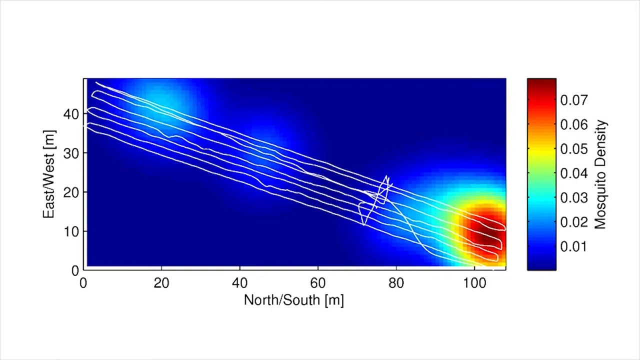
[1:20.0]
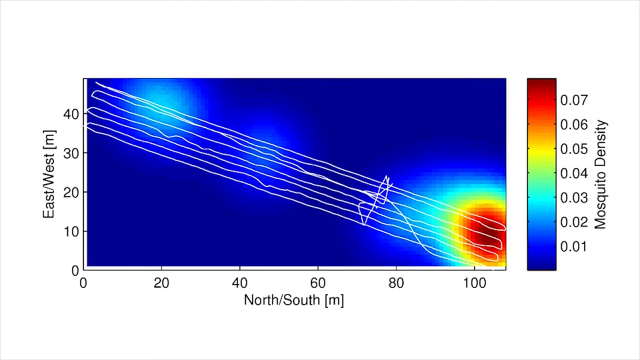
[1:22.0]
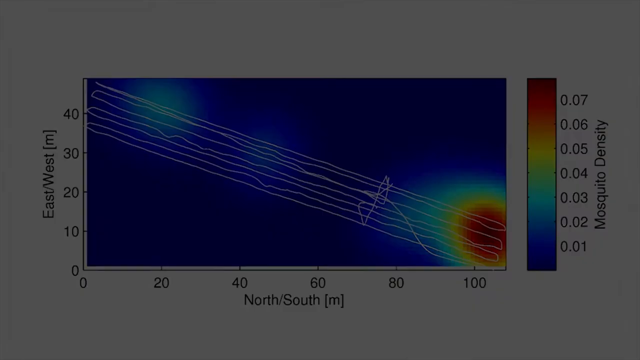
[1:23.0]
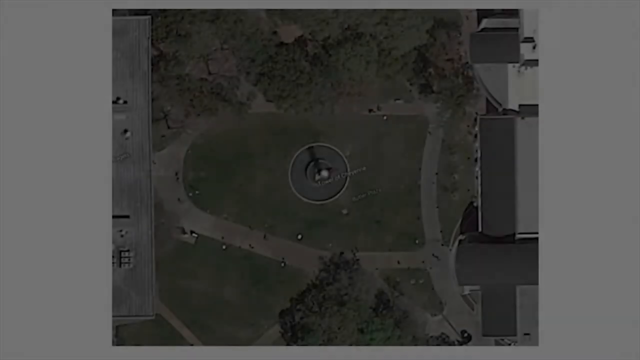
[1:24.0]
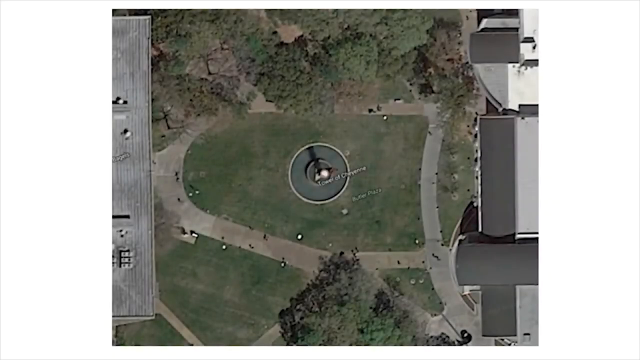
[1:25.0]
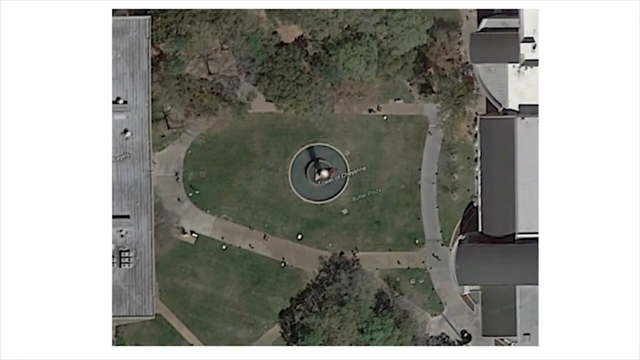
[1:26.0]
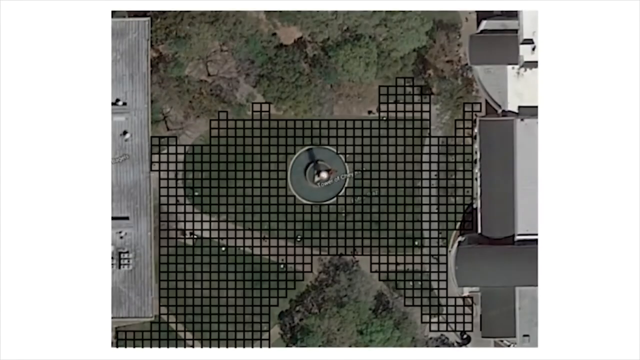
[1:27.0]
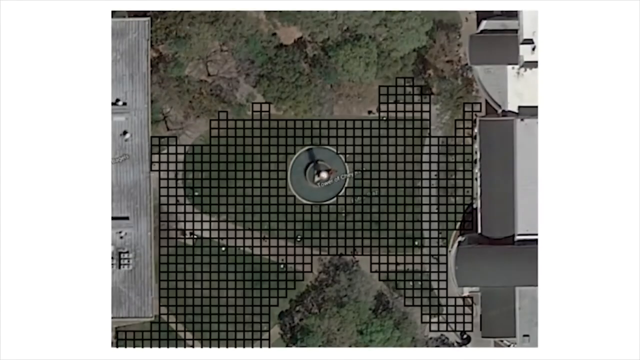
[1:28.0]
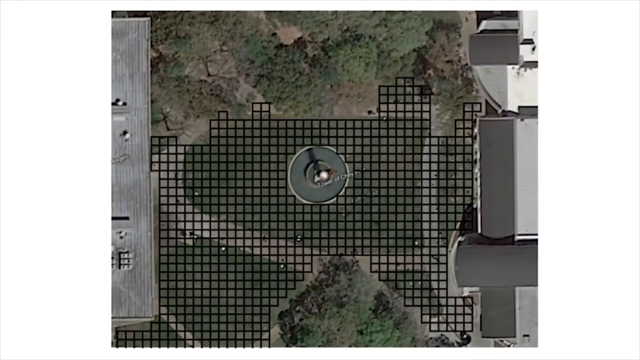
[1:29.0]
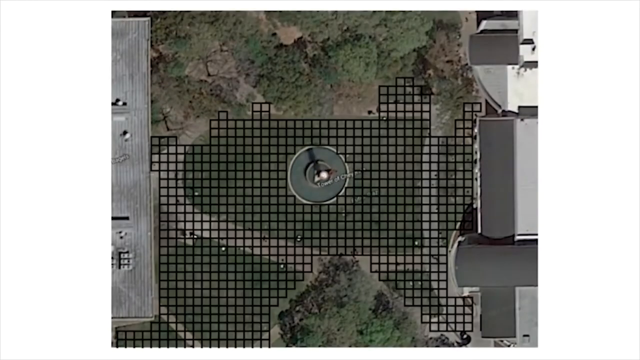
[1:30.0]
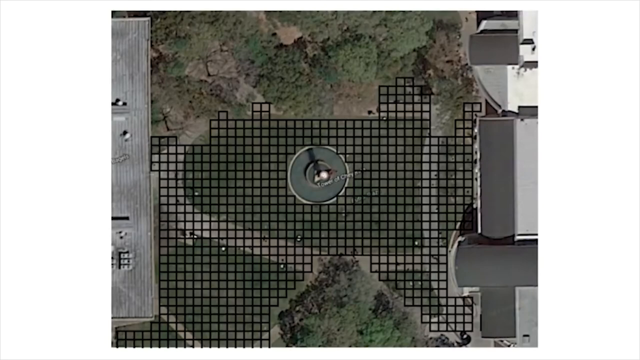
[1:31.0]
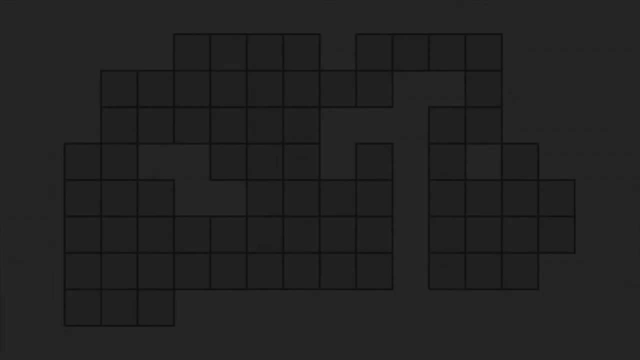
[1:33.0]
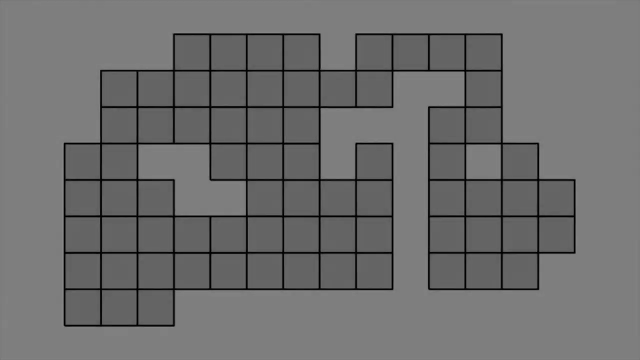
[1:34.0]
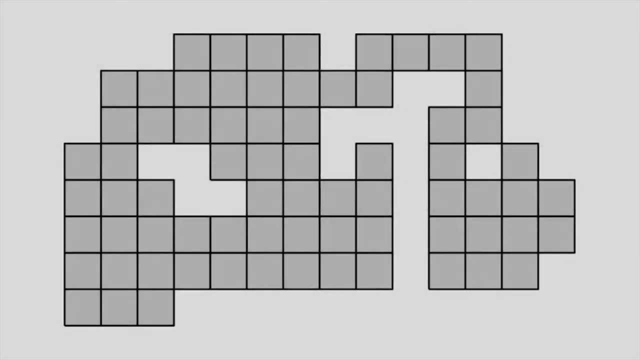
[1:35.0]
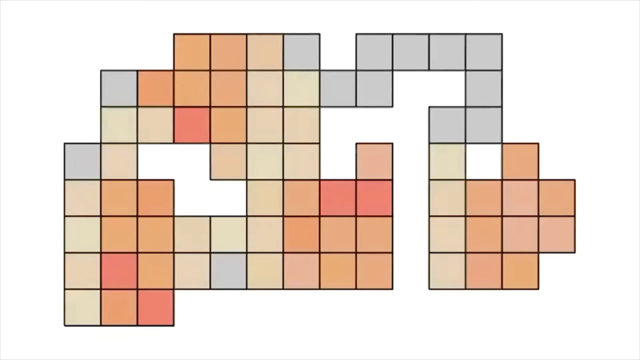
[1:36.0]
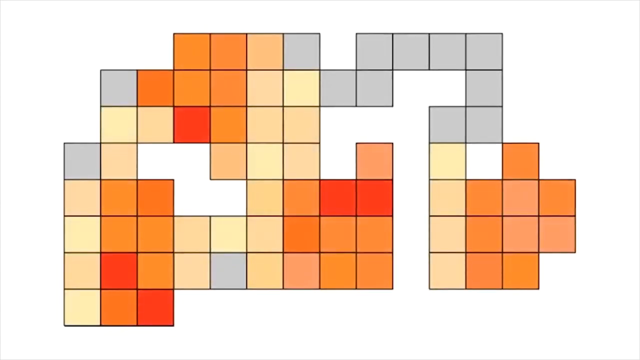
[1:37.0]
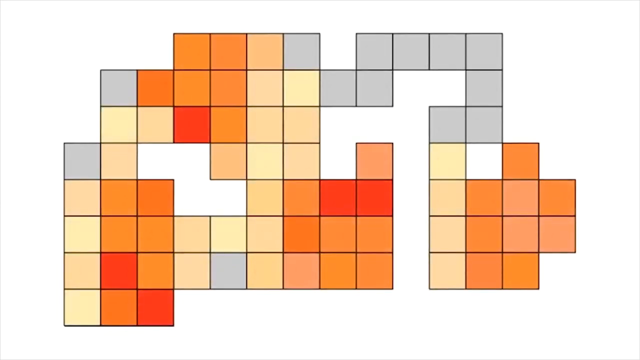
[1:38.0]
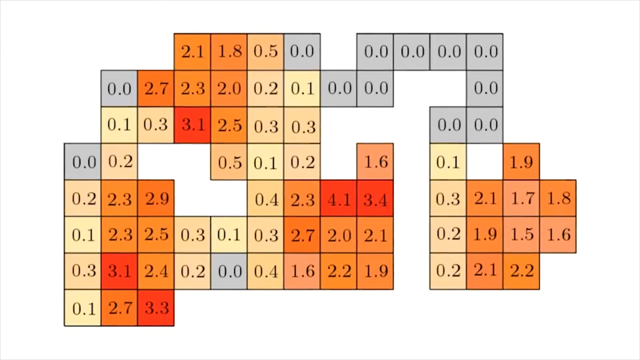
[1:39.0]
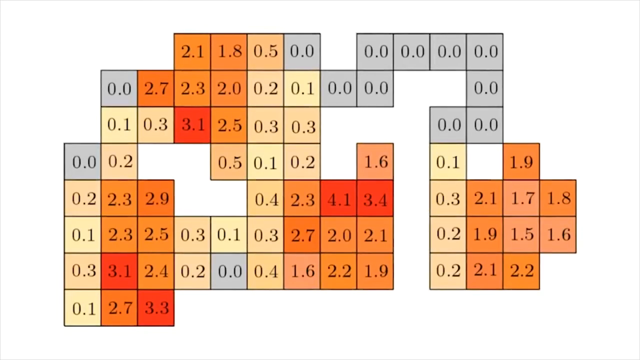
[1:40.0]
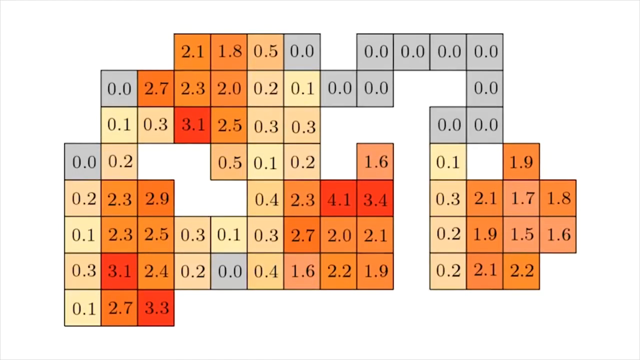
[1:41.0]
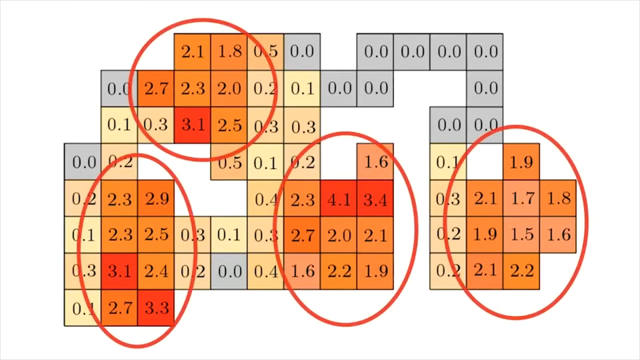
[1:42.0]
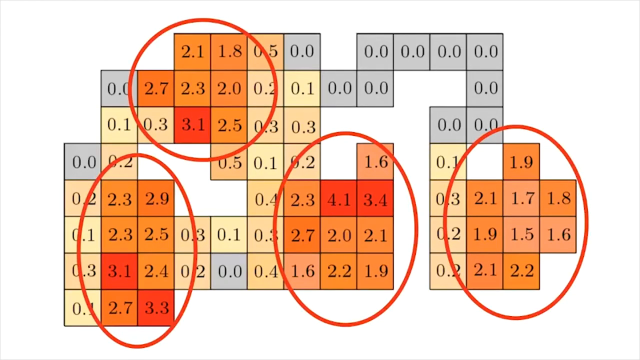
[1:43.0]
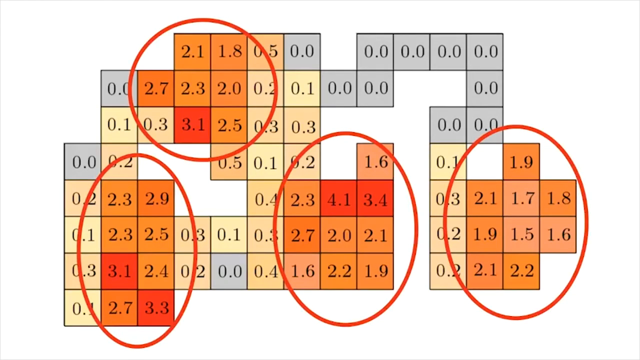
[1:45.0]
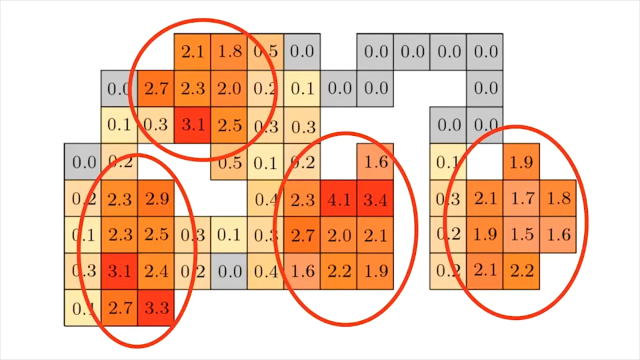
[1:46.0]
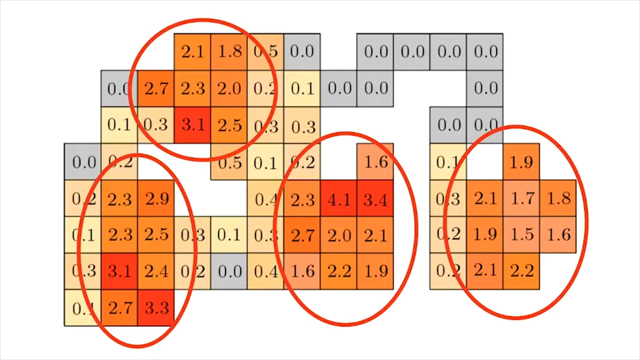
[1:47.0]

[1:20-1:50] A chart appears on an overall white background, with the chart area itself blue. The y-axis runs vertically 0, 10, 20, 30, 40 and is labeled "east/west" in meters; the x-axis runs 0, 20, 40, 60, 80, 100 and is labeled "north/south" in meters. It says "mosquito density," with deep blue at 0.01 and deep red at 0.07, going up in steps of 0.01. A number of lines run from the upper left corner down to the lower right corner. Next comes an aerial view of a field with a black grid placed over it, made up of squares. Some squares are orange, some red, and some gray, each with a number: the gray ones show 0.00, orange ones show 2.3, 2.0, 2.2, 2.1, and 1.9, and deeper orange ones turning to red show values such as 4.1 and 3.4, the threes and fours. The higher the number, the deeper the orange.